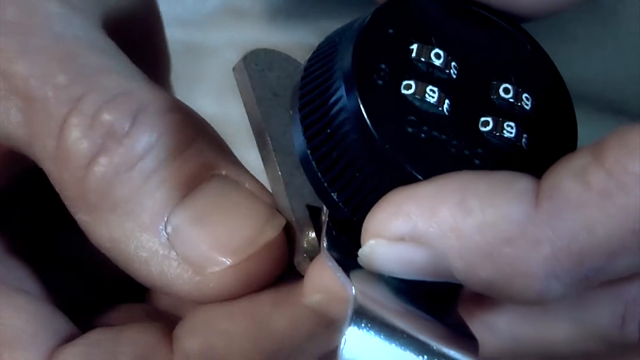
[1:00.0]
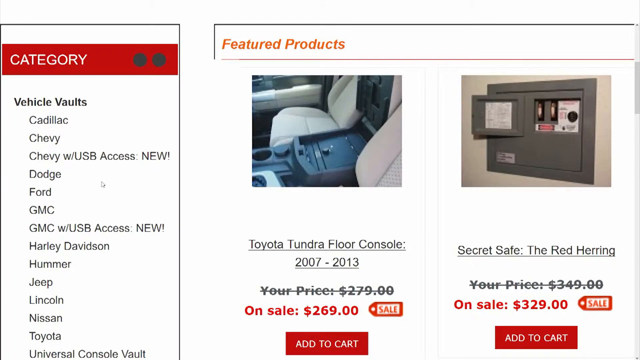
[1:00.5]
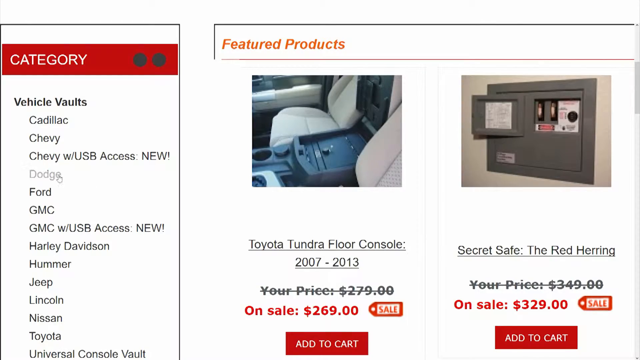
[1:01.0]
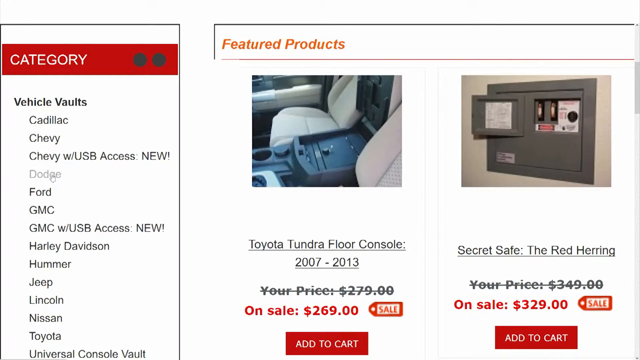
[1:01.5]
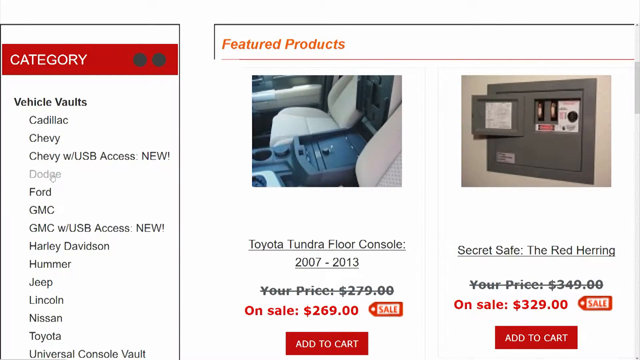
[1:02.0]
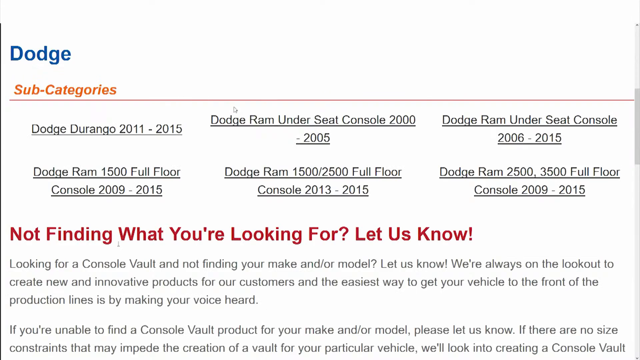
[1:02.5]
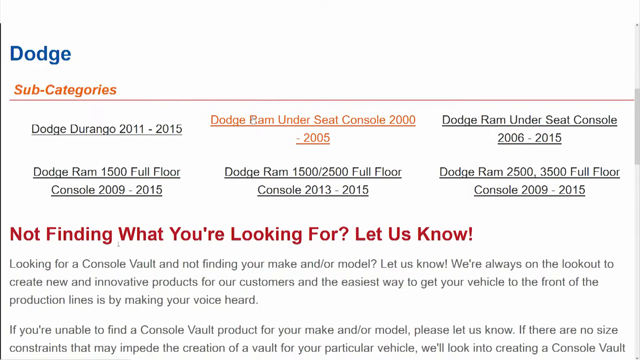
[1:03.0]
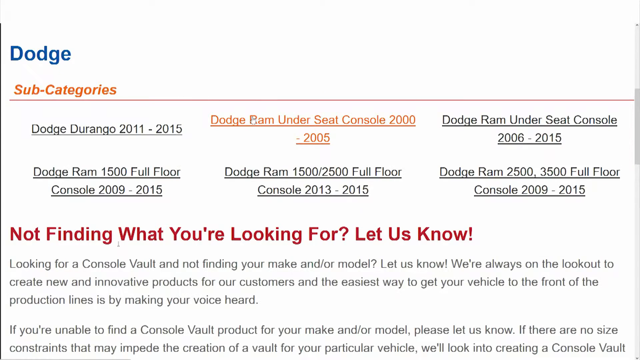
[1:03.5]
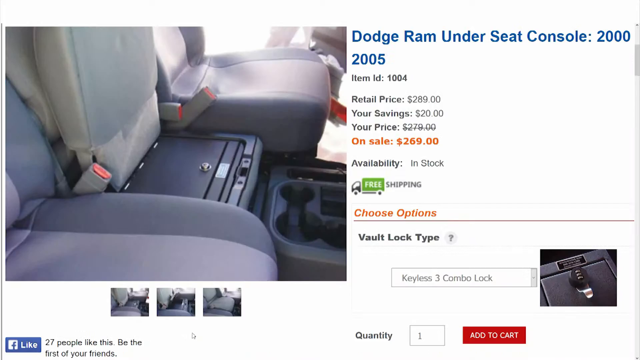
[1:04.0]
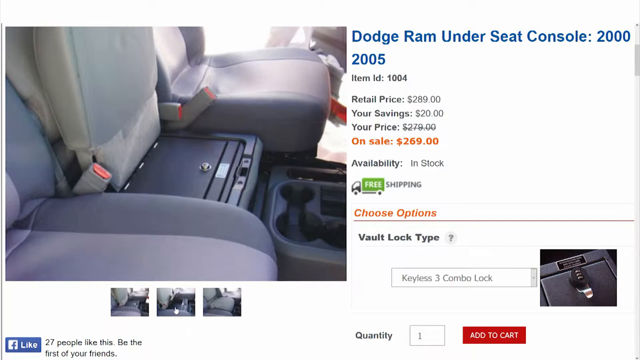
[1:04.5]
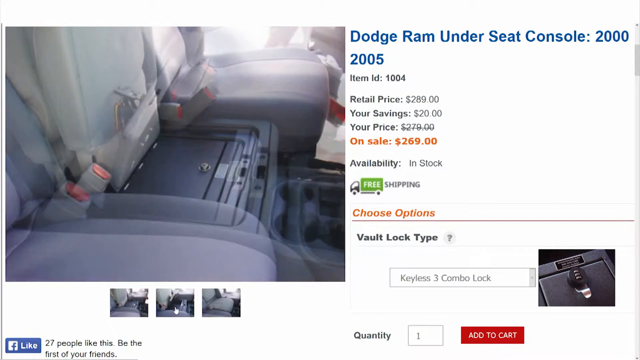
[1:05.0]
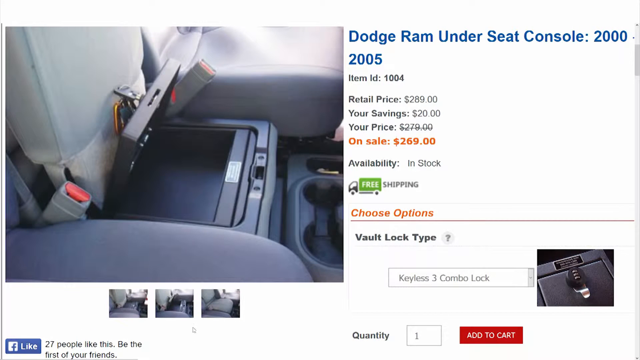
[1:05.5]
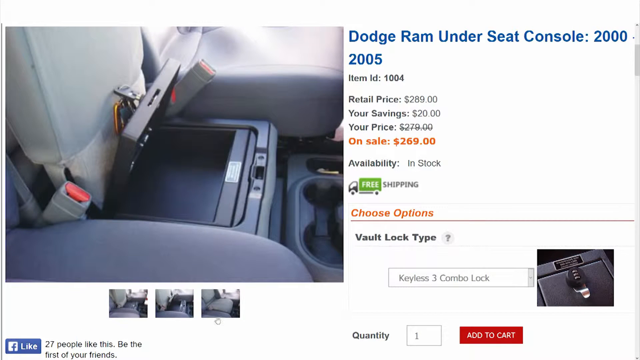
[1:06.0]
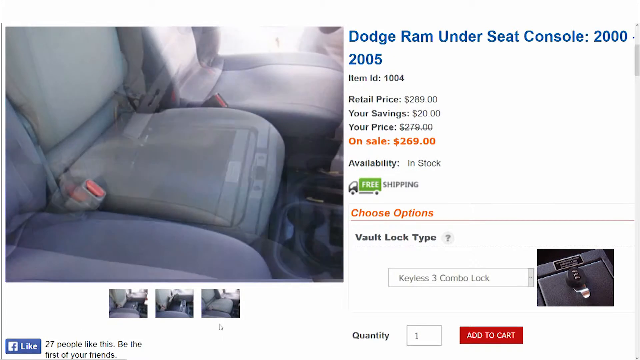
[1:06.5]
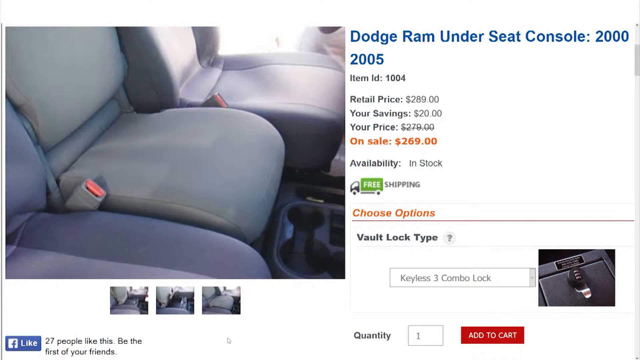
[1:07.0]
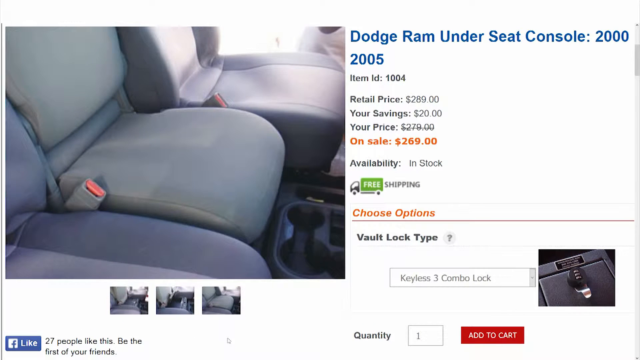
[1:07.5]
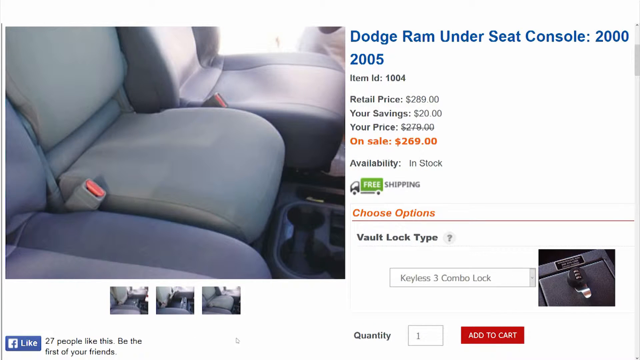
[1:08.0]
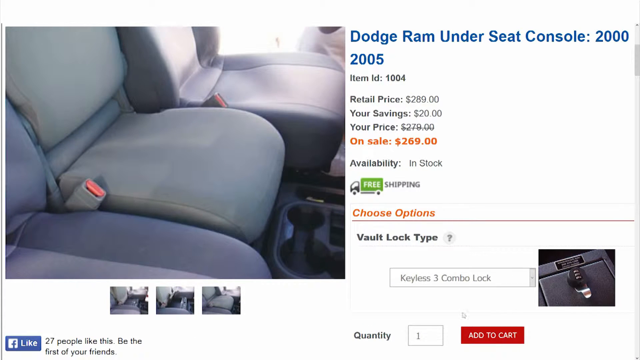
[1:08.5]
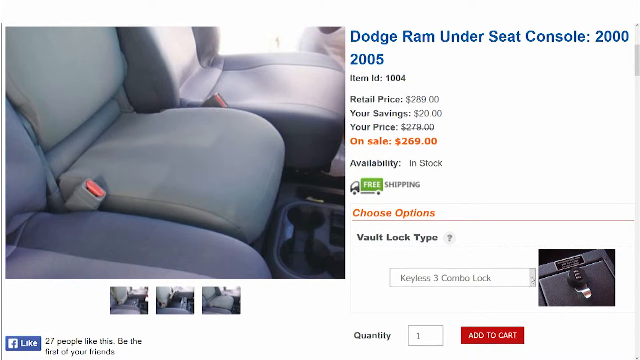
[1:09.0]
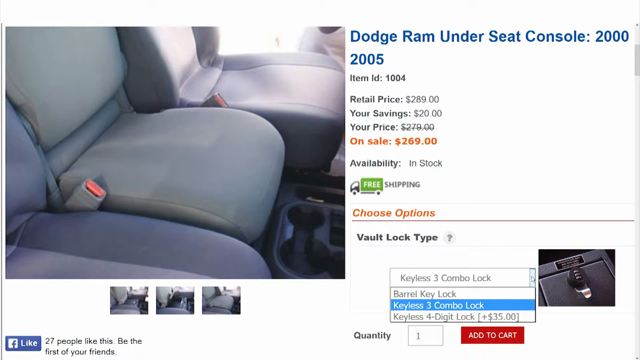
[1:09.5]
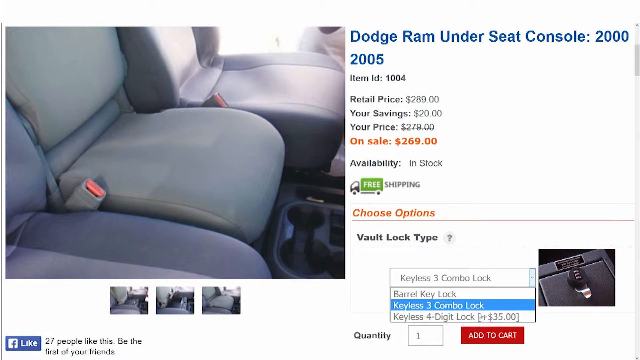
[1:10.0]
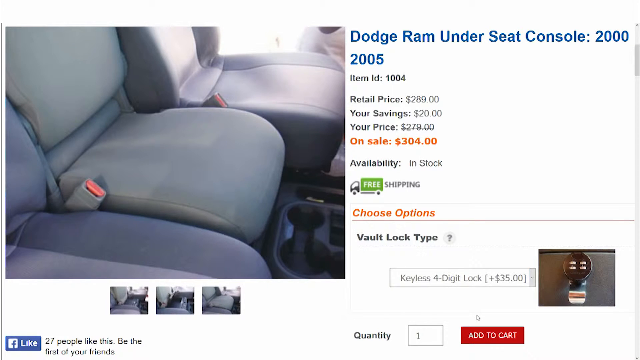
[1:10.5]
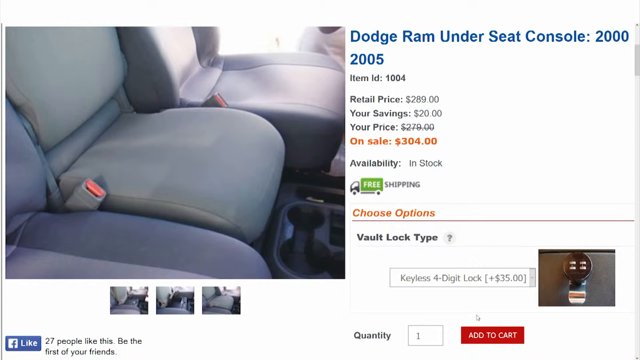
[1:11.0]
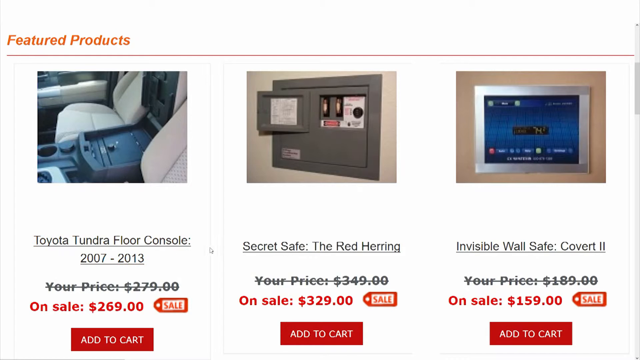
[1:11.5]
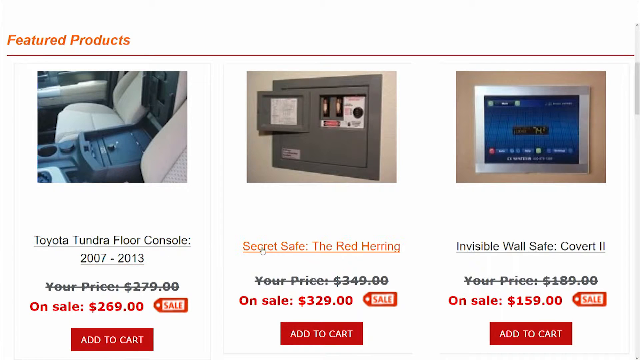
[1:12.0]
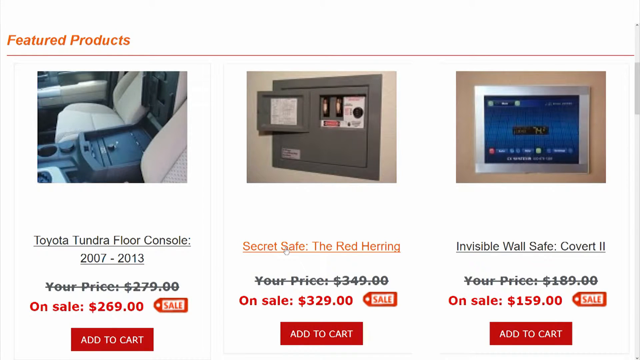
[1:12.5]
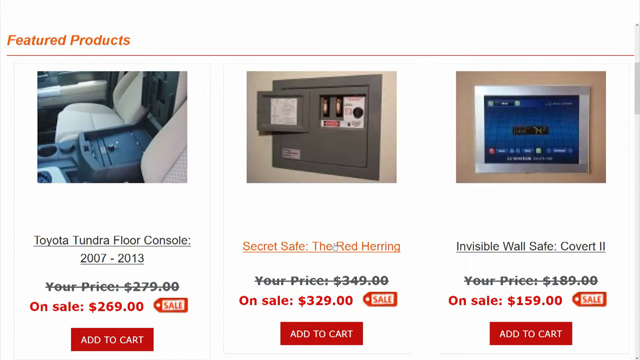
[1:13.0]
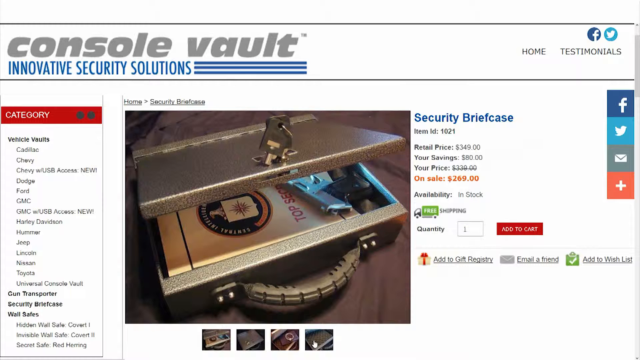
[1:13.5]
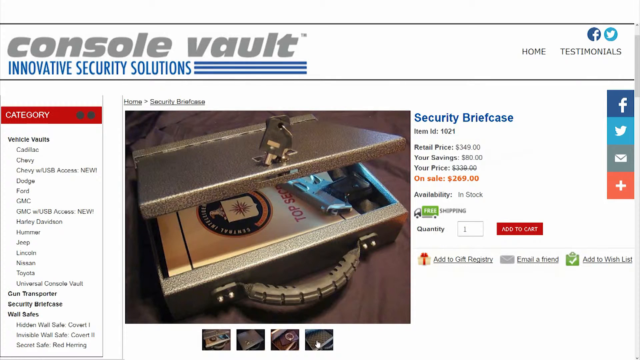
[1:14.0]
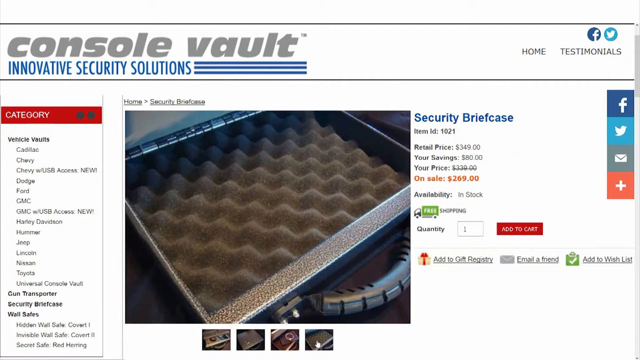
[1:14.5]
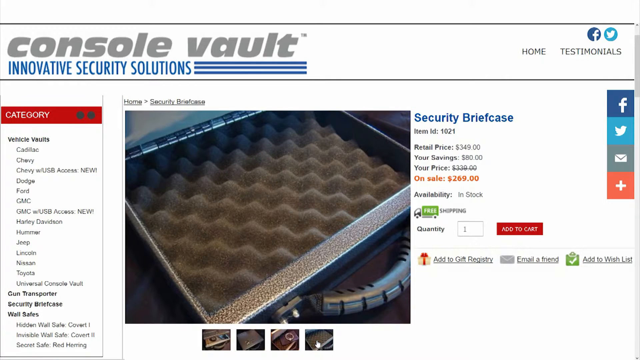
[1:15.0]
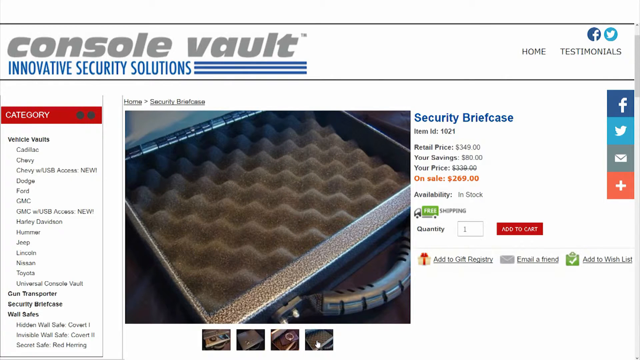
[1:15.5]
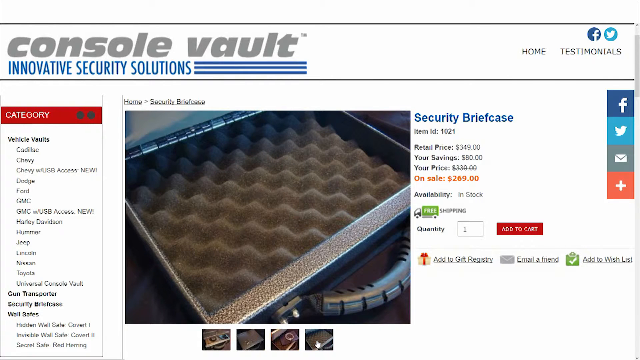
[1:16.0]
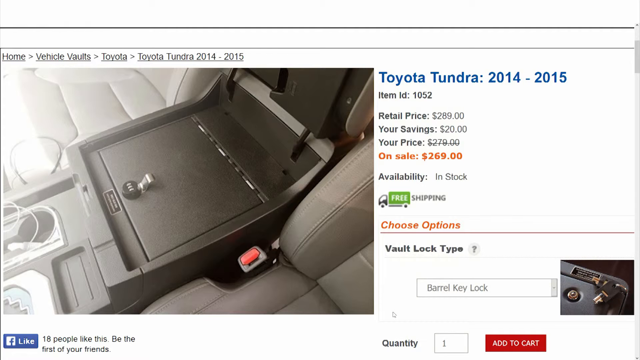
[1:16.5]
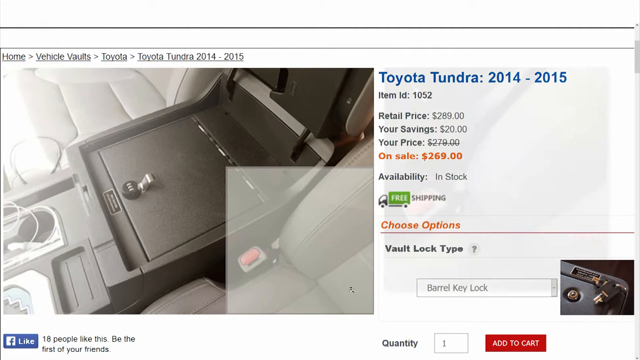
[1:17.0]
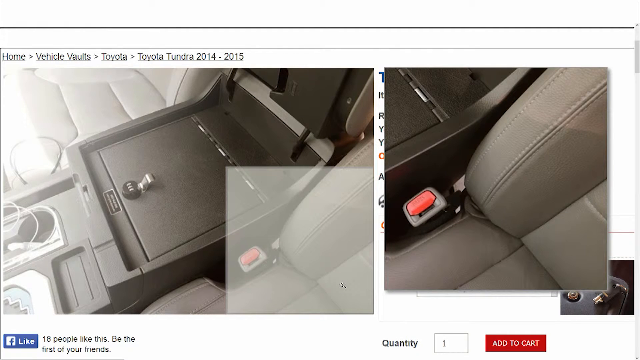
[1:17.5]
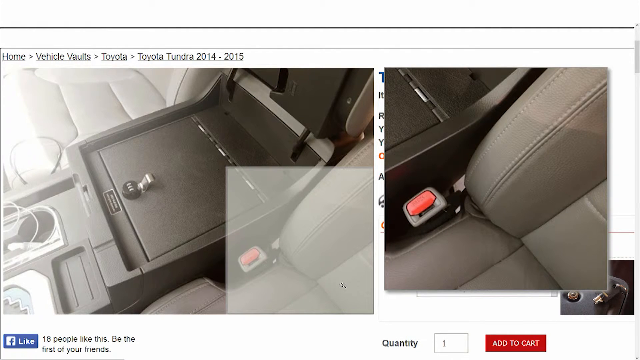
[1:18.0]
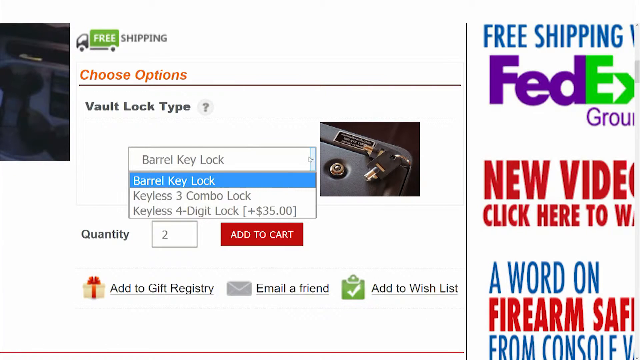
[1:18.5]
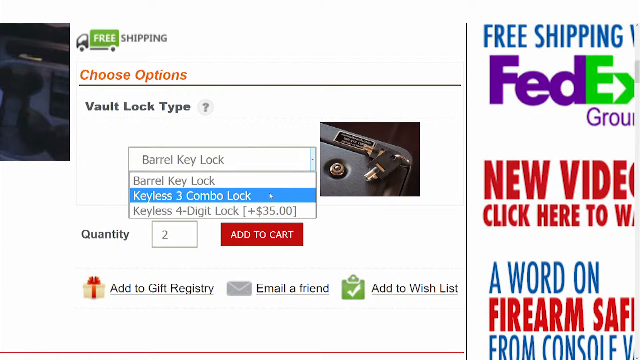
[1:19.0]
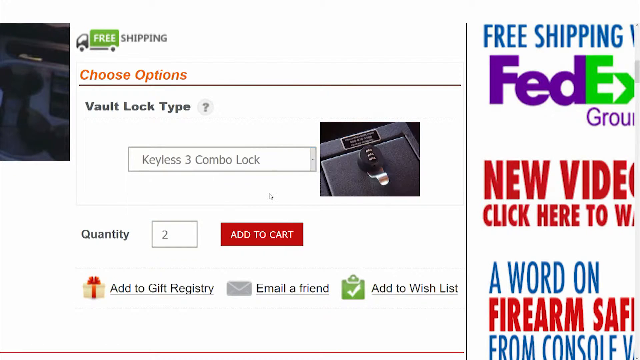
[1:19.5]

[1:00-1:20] The fingers continue to manipulate the lock, and the screen transitions back to the home page of the Console Vault website, where the car vault manufacturers are listed. The cursor hovers over Dodge and clicks it, then clicks the subcategory Dodge Ram Under Seat Console 2000-2005. An image of a Dodge Ram with the center front seat folded up and a vault underneath the seat appears; the vault is on sale for $269. The images cycle: the first shows the vault open, the second shows the seat closed, and the third shows the vault closed. A vault lock type drop-down menu is opened, showing three options: a barrel keylock, a keyless 3 combo lock, or a keyless 4 digit lock, which is an extra $35. The video goes back to the homepage, where three featured products are shown: a Toyota Tundra floor console, a secret safe, and an invisible wall safe. A security briefcase is then shown for $269, seemingly a locked briefcase. After this, a Toyota Tundra lock is shown, with zoomed-in views of its image and of the vault lock type menu showing the three lock options.